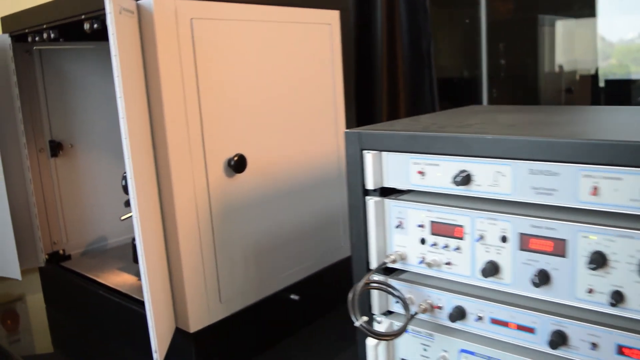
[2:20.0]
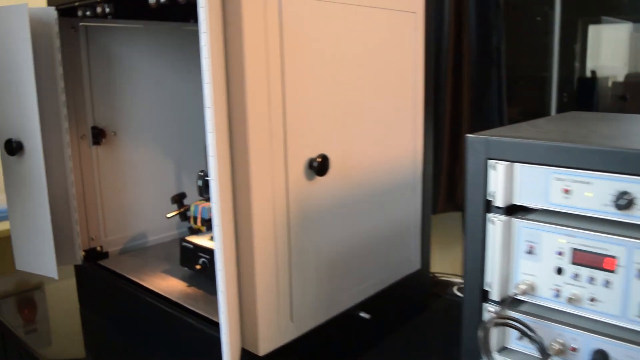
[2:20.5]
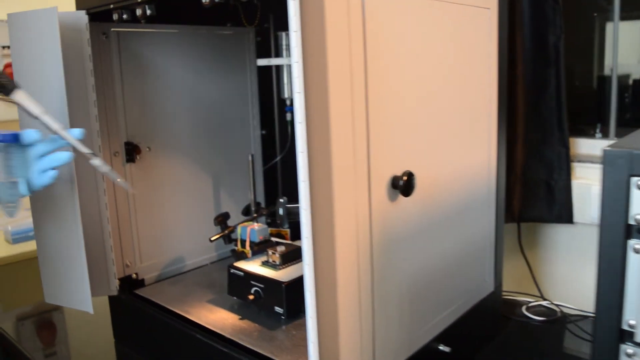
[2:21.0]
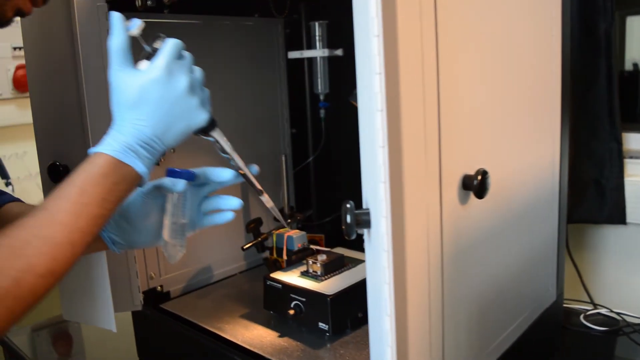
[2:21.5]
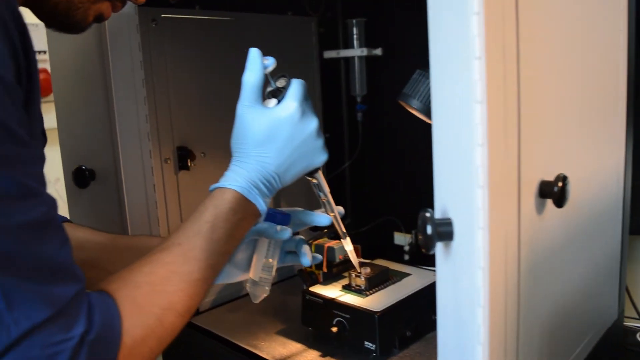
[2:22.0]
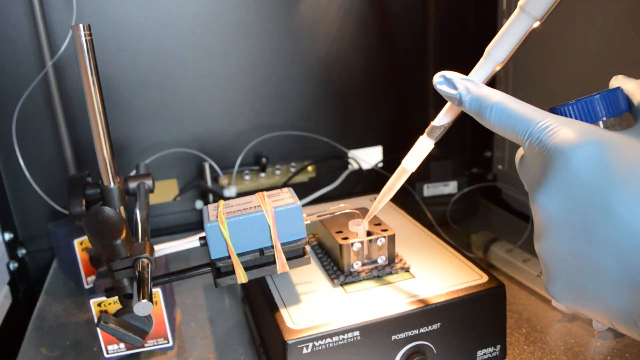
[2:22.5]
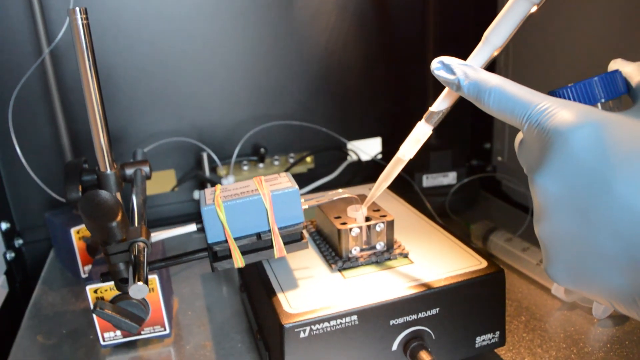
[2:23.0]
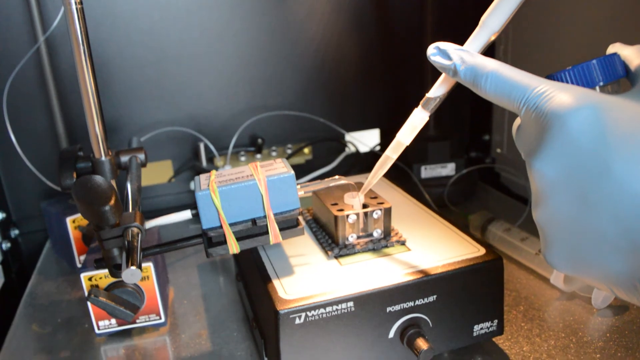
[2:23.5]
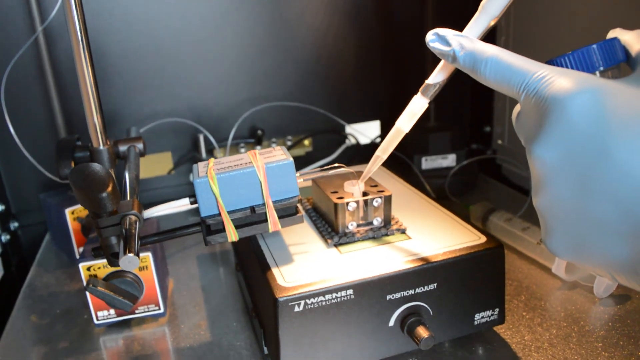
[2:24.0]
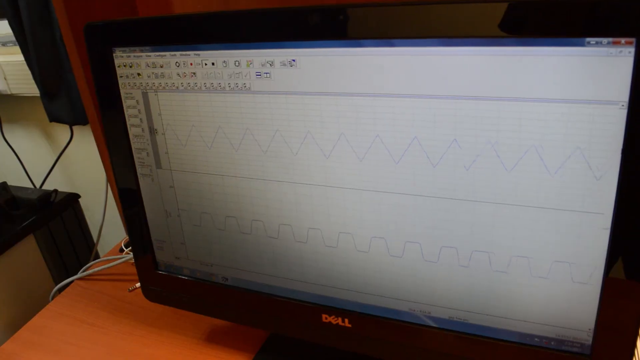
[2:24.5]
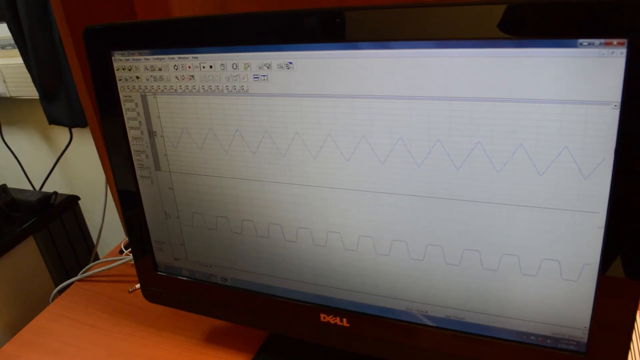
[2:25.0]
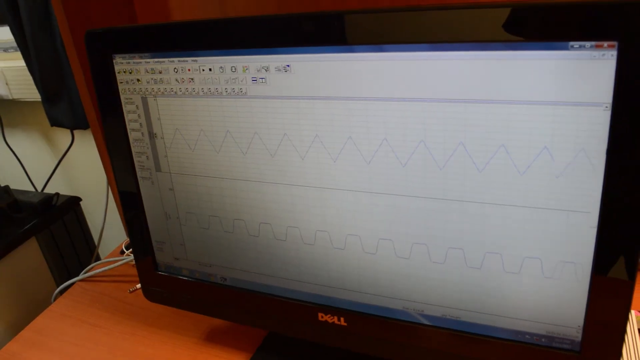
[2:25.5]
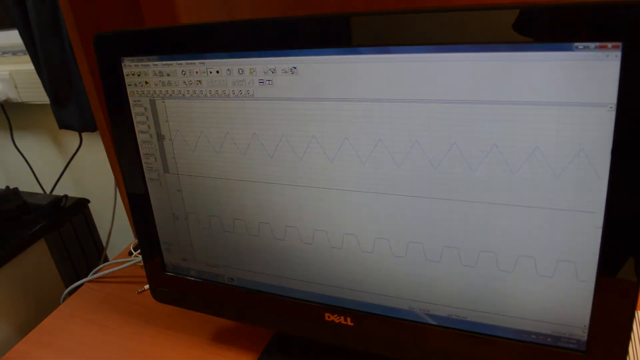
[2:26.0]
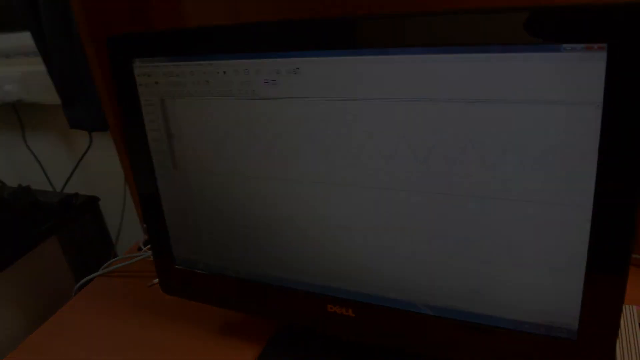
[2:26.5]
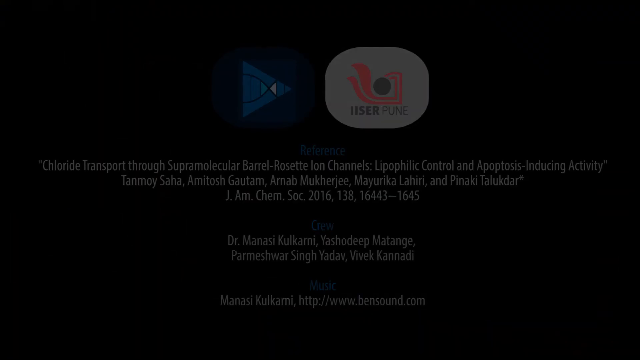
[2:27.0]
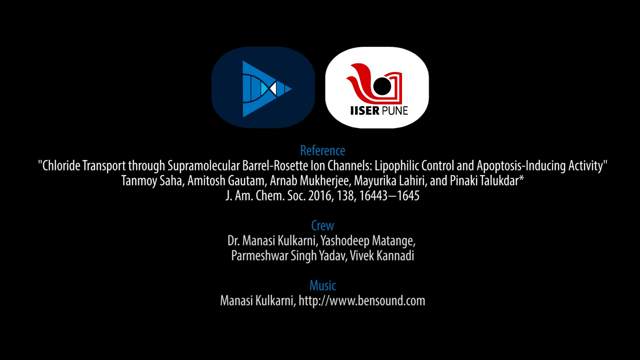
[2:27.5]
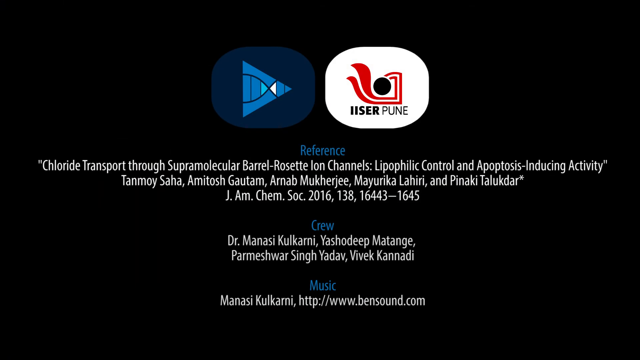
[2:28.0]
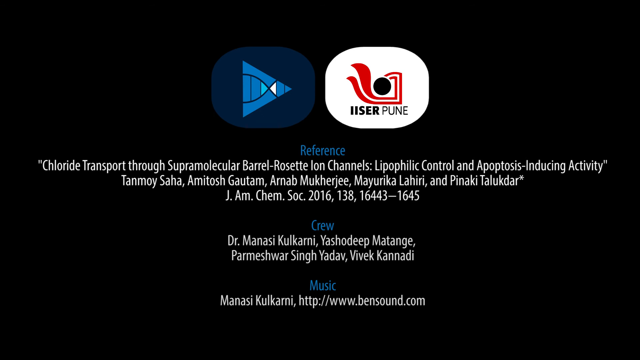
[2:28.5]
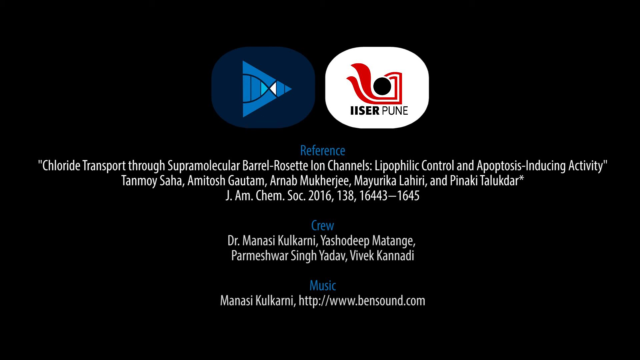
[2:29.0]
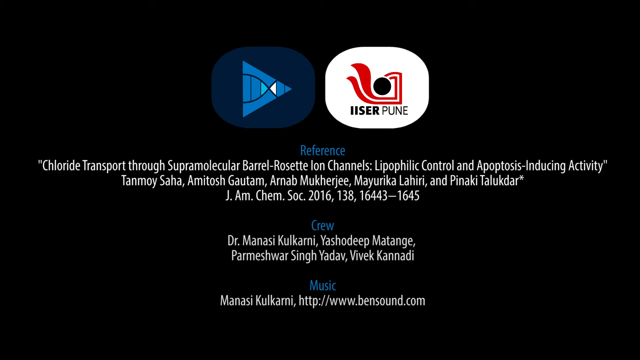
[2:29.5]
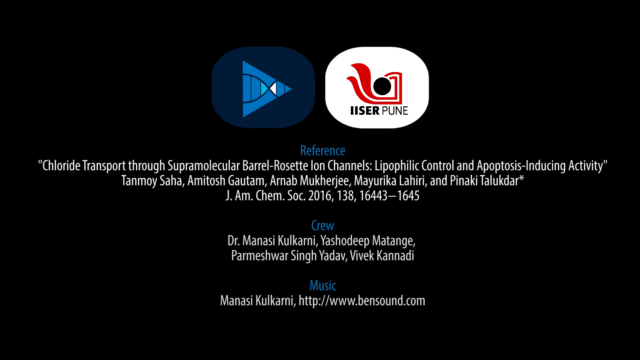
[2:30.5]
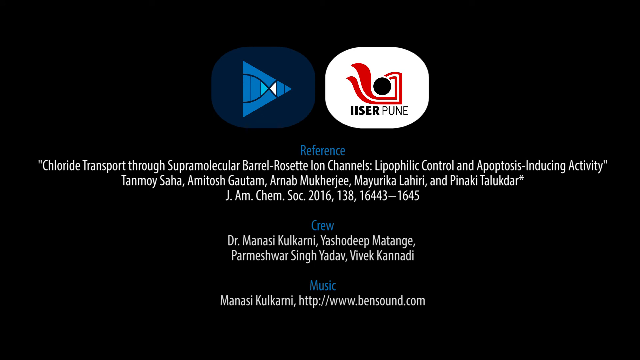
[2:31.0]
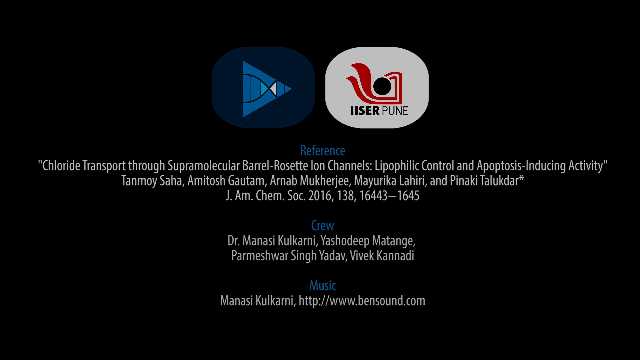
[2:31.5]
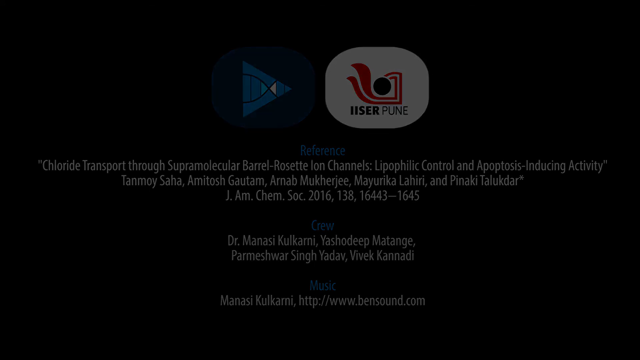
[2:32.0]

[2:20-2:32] In a laboratory, a person's gloved hands use some type of tube to place liquid into a device that measures something. A computer screen then shows measurements of what is being examined. At the end of the video, a credit to Iser Puhn appears, followed by the text "chloride transport through supramolecular" and "rosetta ion channels".